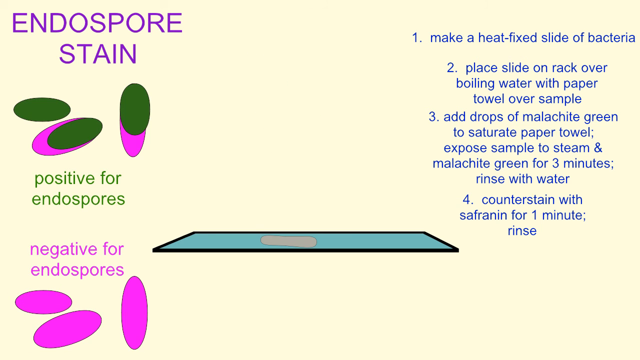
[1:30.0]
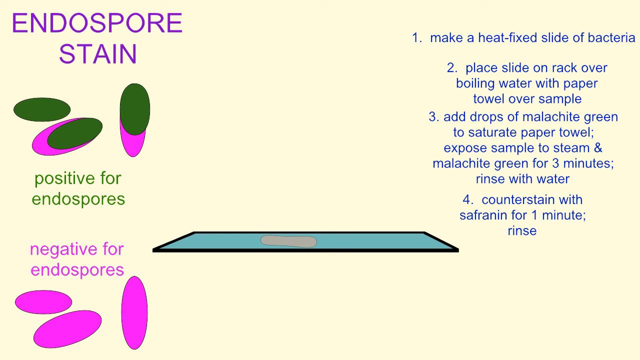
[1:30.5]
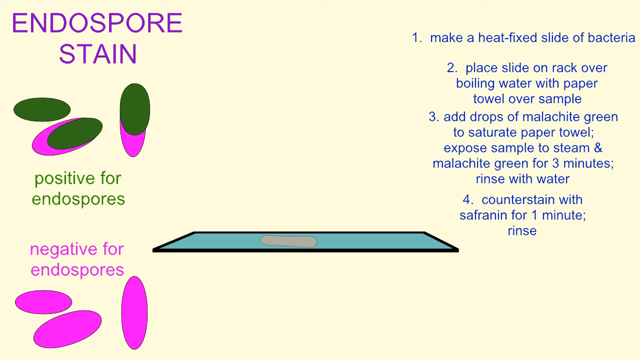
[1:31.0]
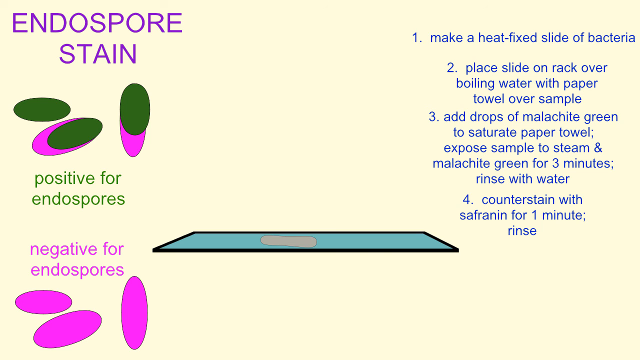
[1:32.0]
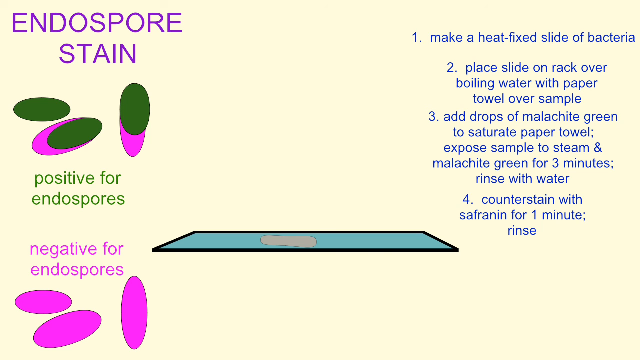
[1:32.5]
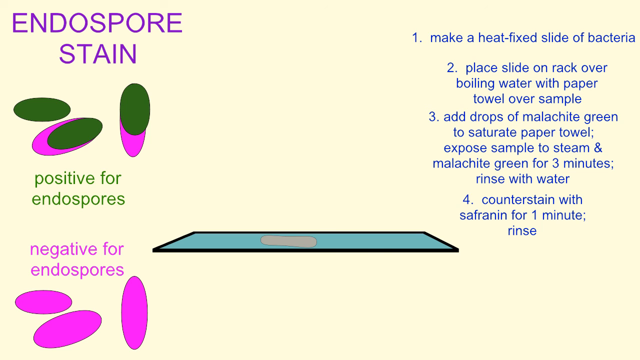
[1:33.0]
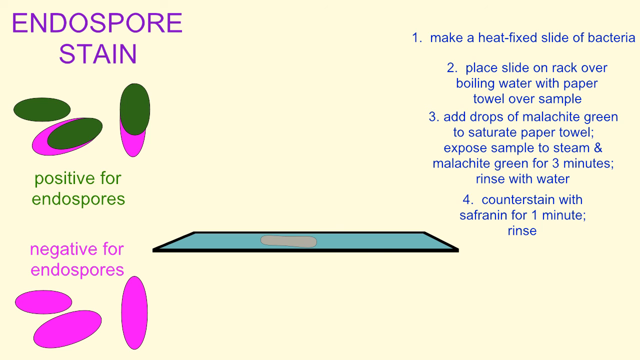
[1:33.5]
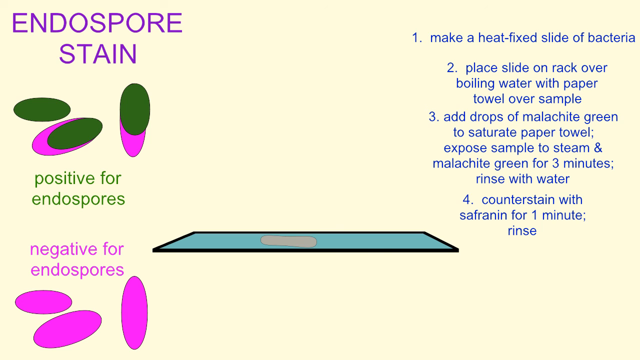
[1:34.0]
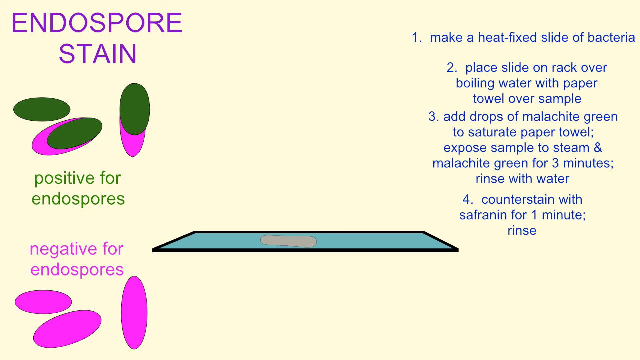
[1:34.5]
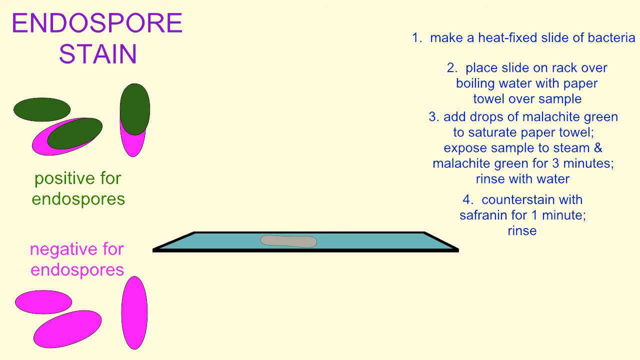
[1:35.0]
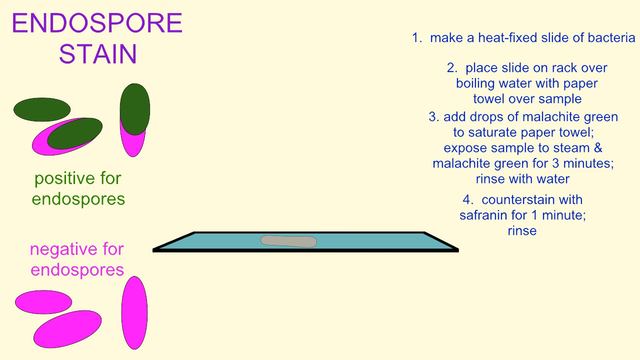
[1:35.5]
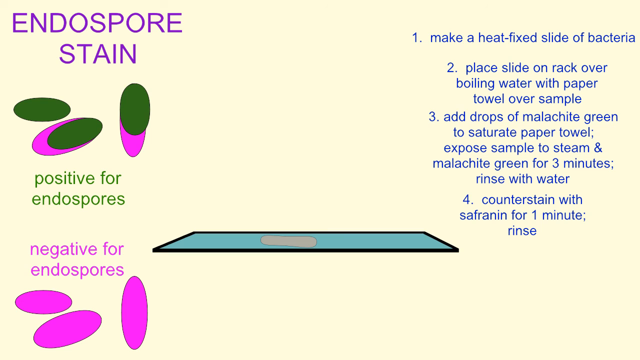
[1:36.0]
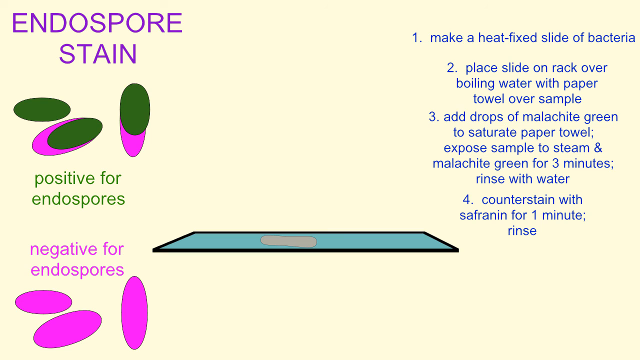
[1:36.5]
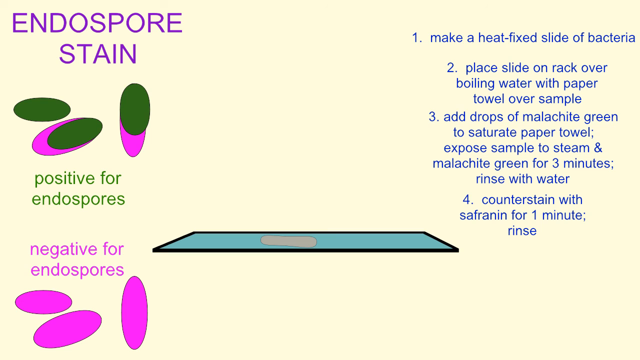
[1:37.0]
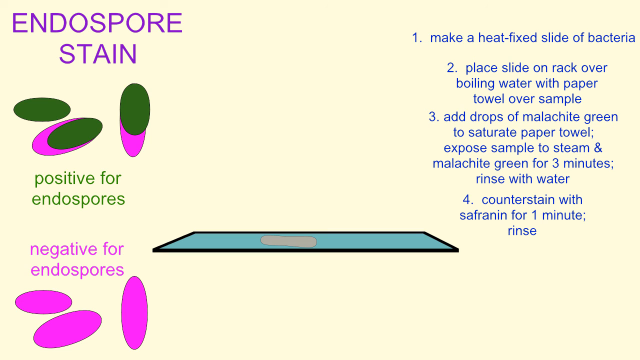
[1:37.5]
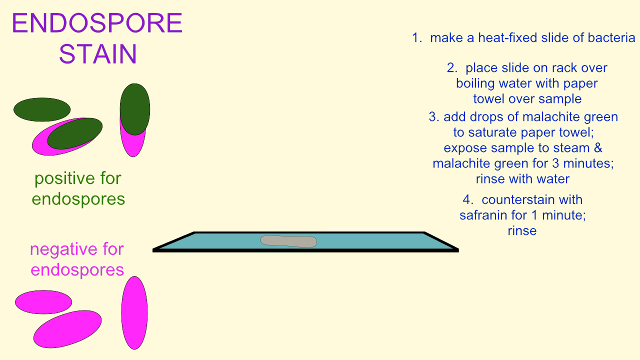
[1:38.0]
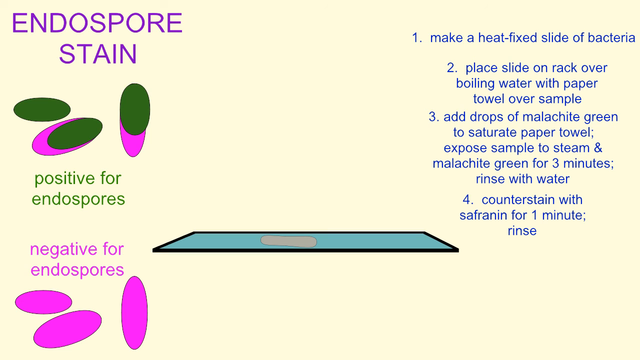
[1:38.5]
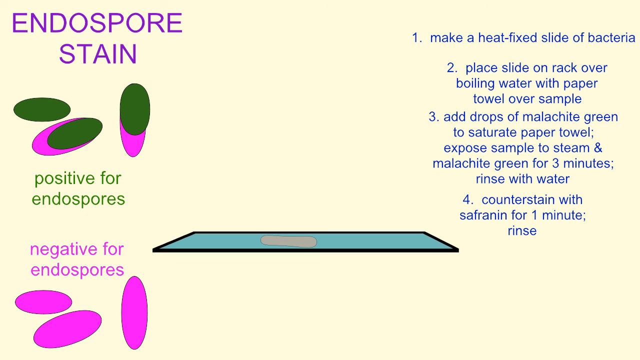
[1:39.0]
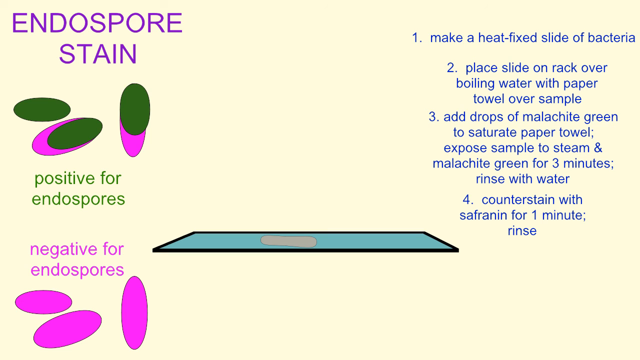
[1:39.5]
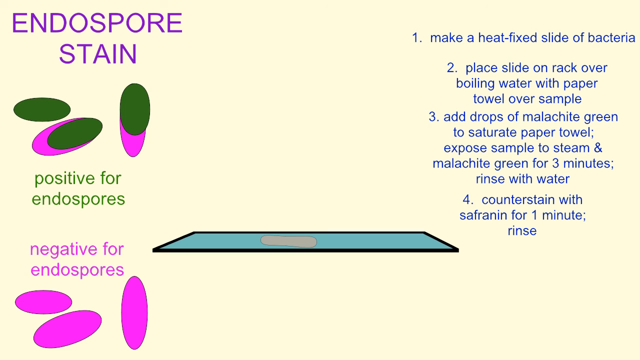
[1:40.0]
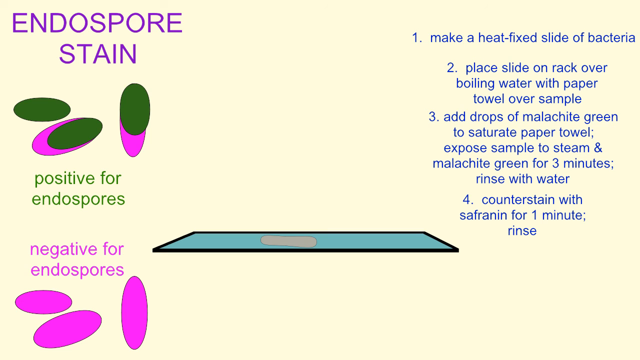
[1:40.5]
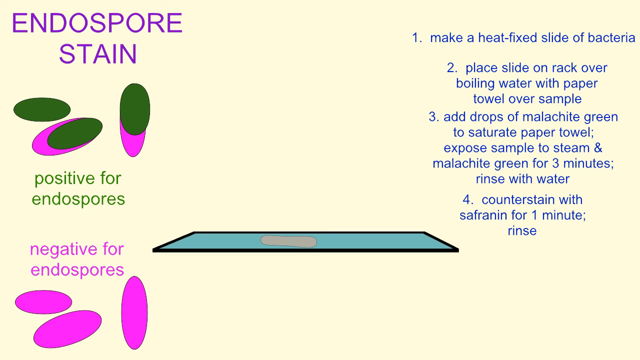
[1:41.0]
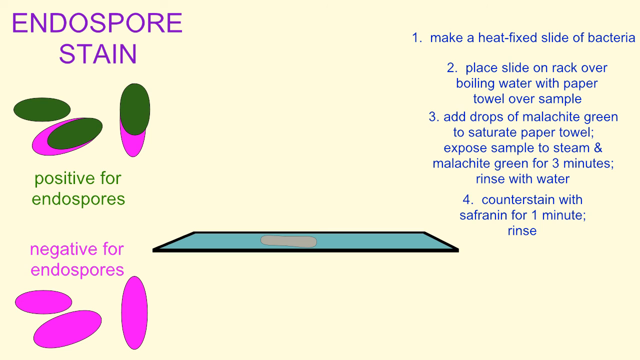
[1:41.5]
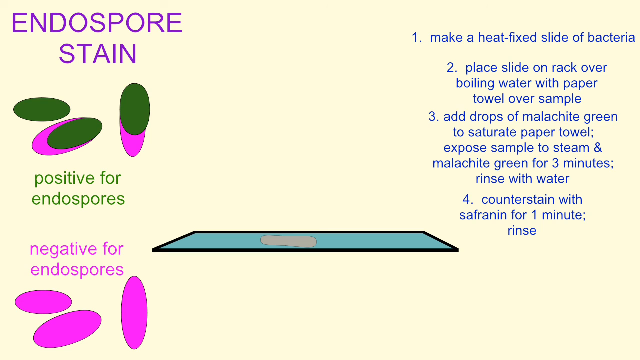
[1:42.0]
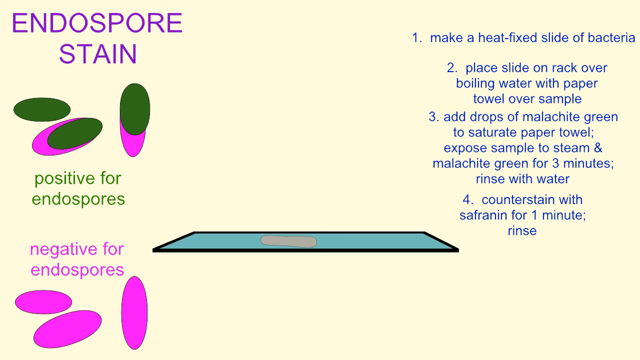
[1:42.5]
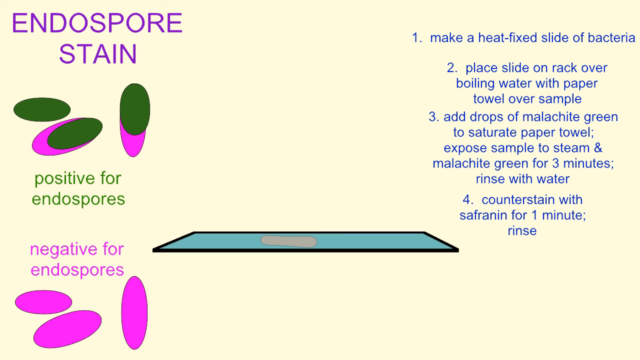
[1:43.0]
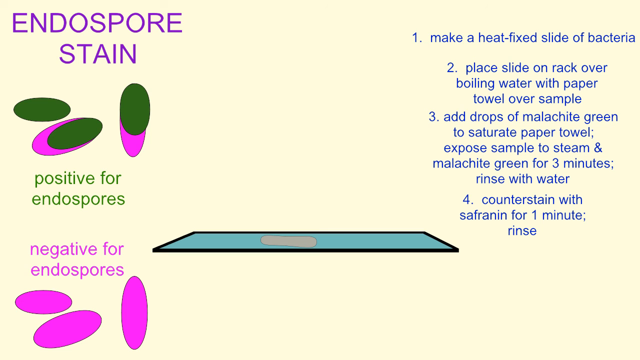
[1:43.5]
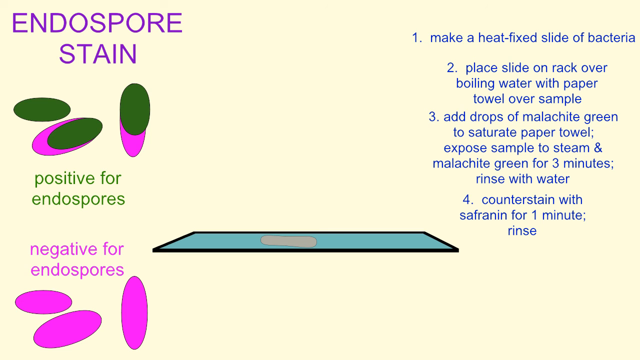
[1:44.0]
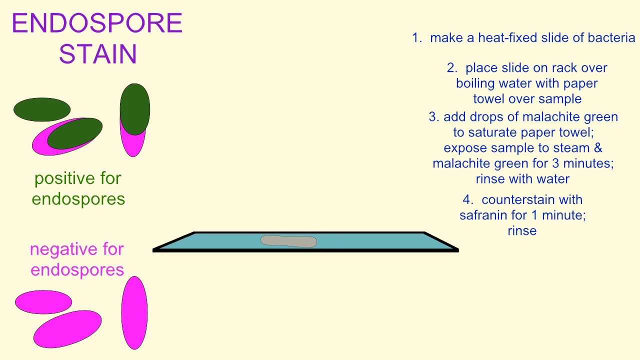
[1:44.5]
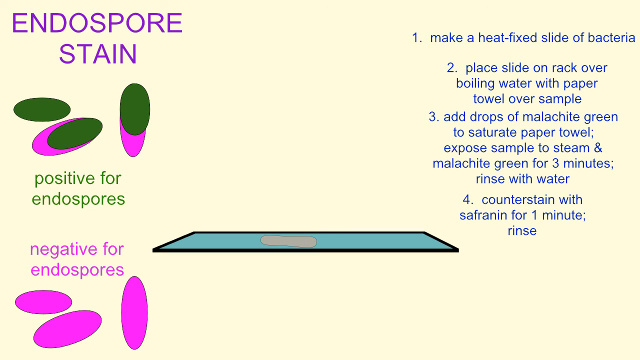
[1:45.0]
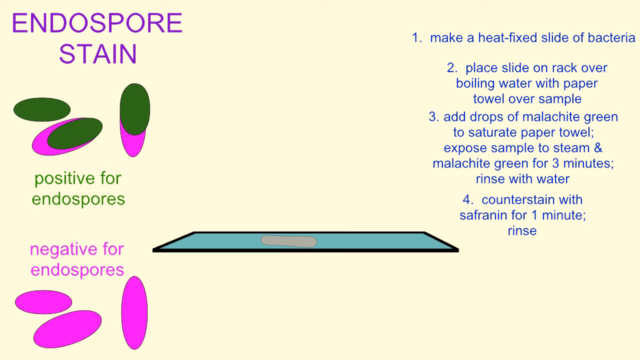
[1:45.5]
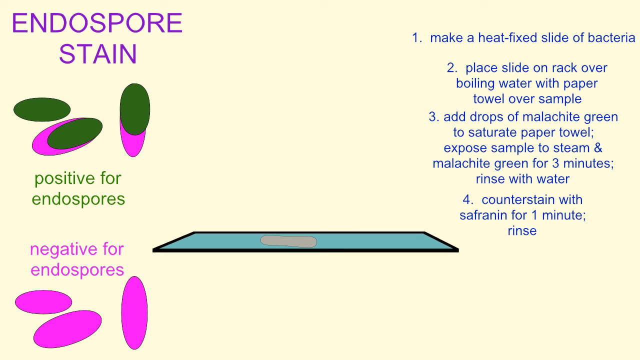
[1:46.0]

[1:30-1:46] In the upper left, "endospore stain" appears in purple, all uppercase letters. Underneath are green ovals and purple ovals, with some of the green ovals on top of the purple ovals. Below them, green text reads "positive for endospores," and underneath that, purple text reads "negative for endospores," with some more purple ovals. The heat slide is in the middle with the gray bacteria on top of it. On the right, the steps are listed in blue font: number one, "make a heat fixed slide of bacteria"; number two, "place slide on rack over boiling water with paper towel over sample"; number three, "add drops of malachite green saturate paper towel expose sample to steam and malachite green for three minutes rinse with water"; and number four, "counter stain with safranin for one minute and rinse."